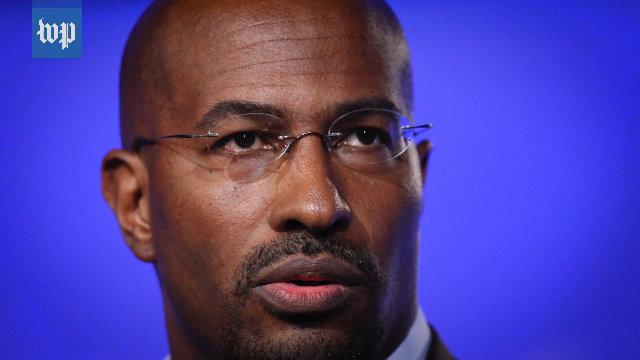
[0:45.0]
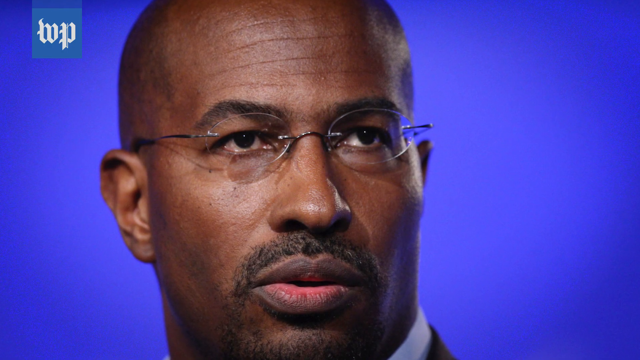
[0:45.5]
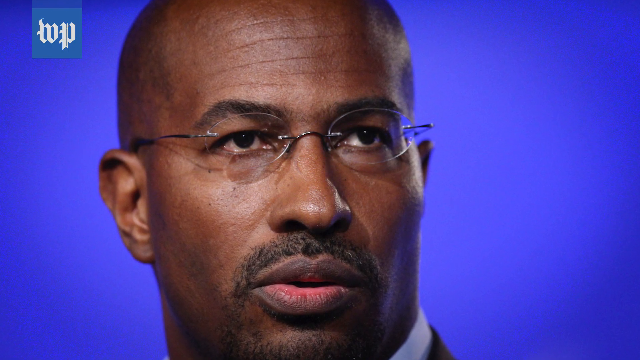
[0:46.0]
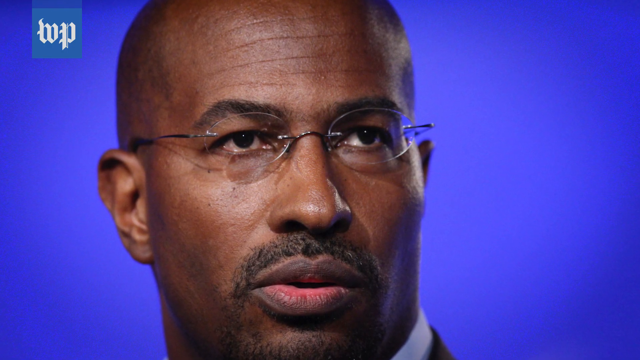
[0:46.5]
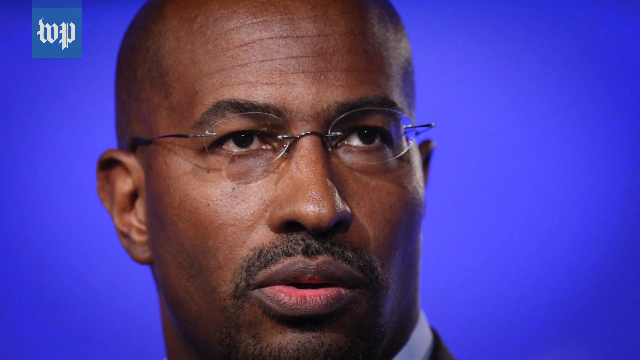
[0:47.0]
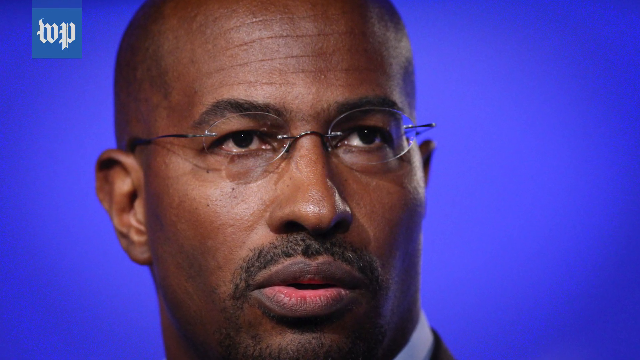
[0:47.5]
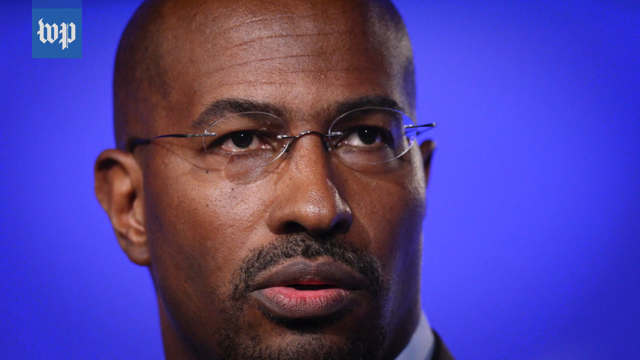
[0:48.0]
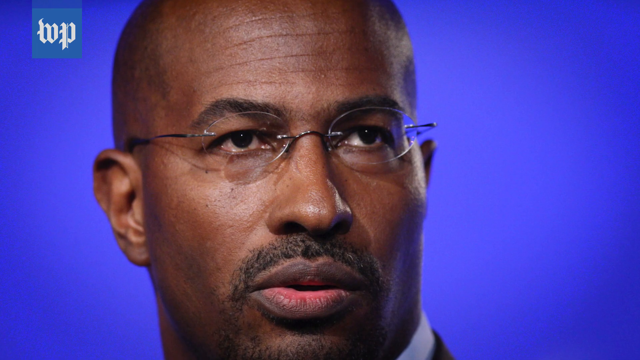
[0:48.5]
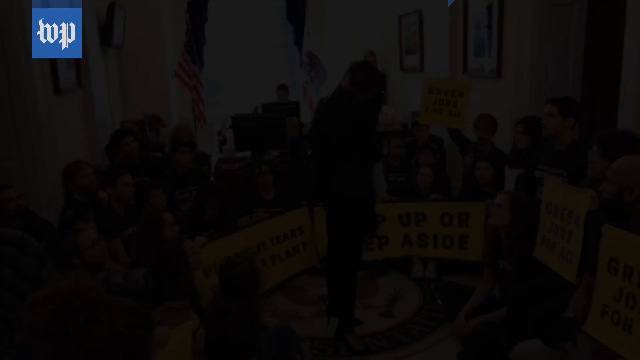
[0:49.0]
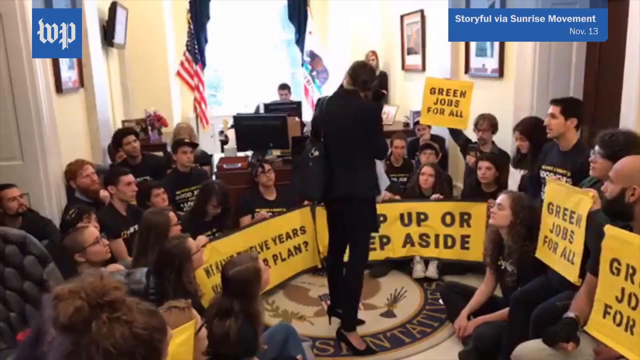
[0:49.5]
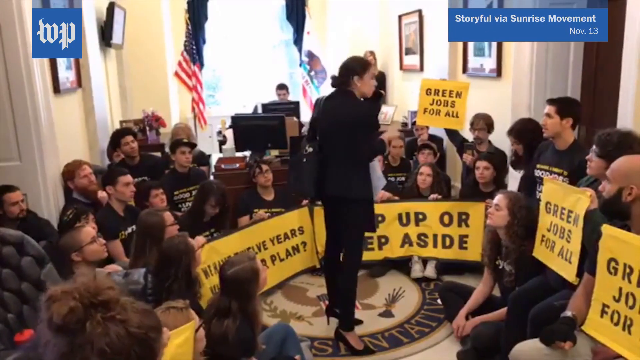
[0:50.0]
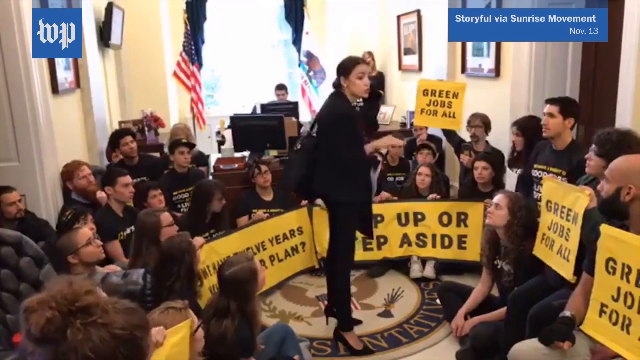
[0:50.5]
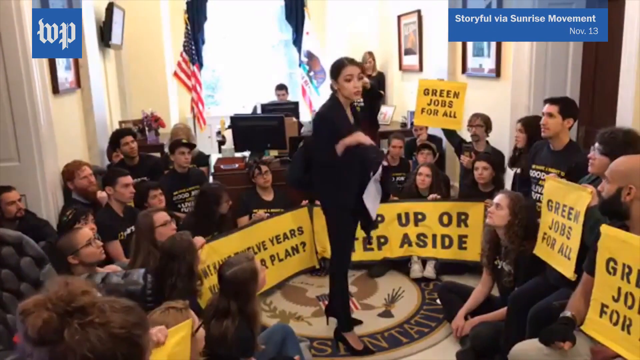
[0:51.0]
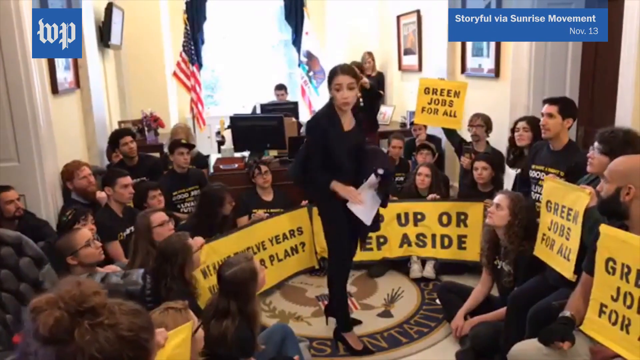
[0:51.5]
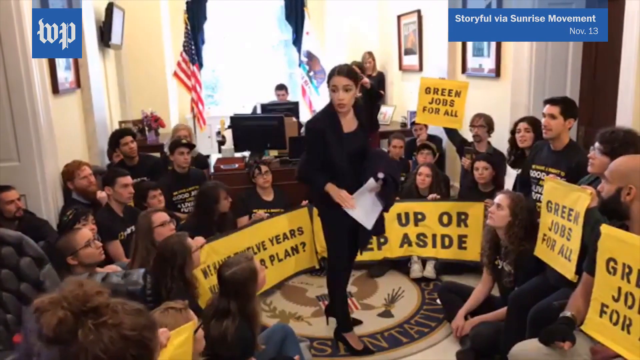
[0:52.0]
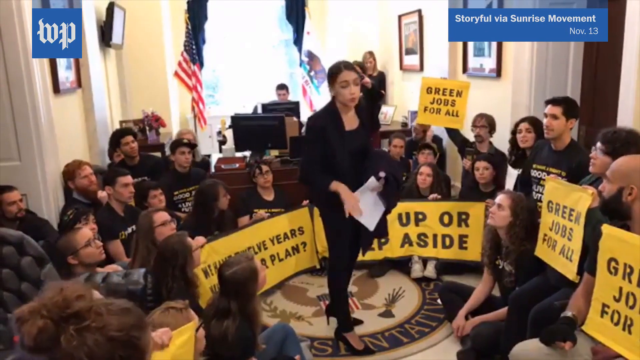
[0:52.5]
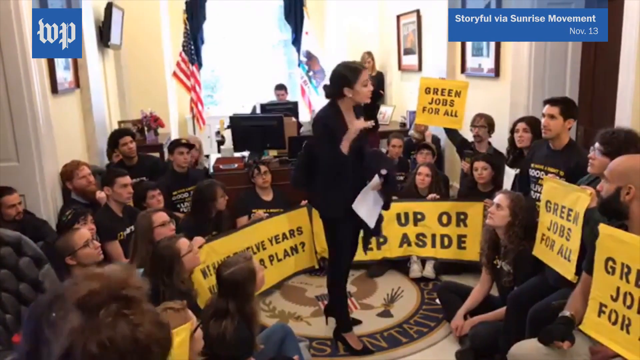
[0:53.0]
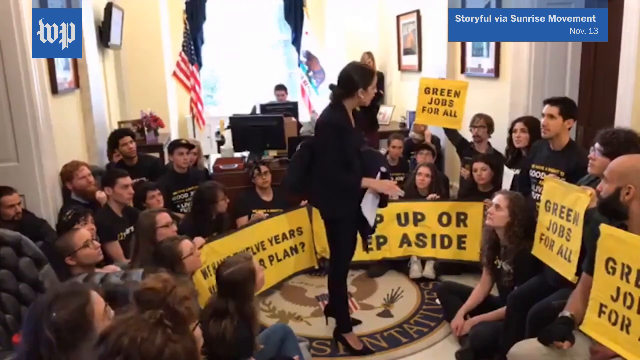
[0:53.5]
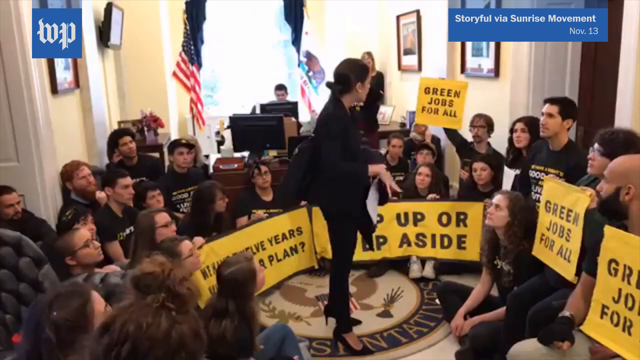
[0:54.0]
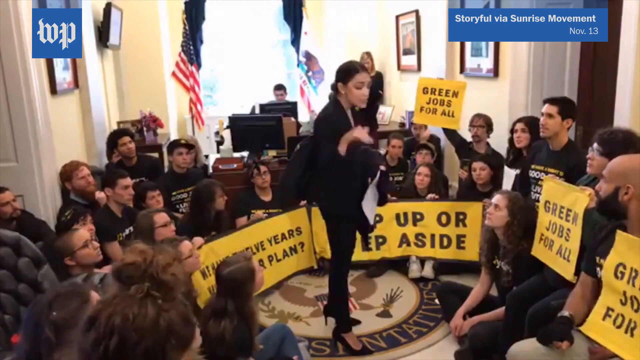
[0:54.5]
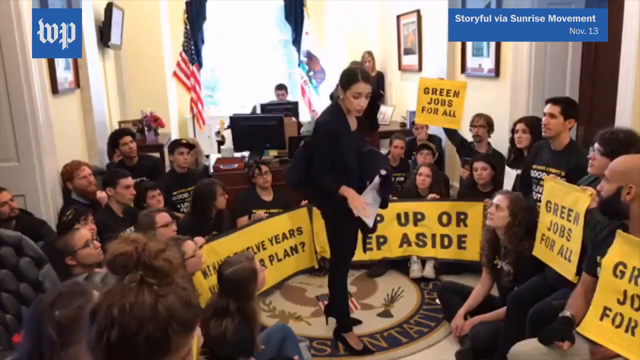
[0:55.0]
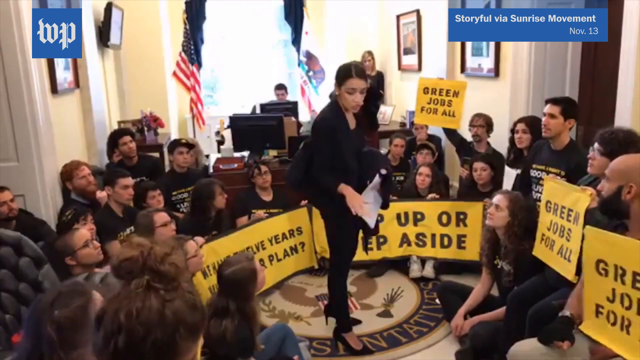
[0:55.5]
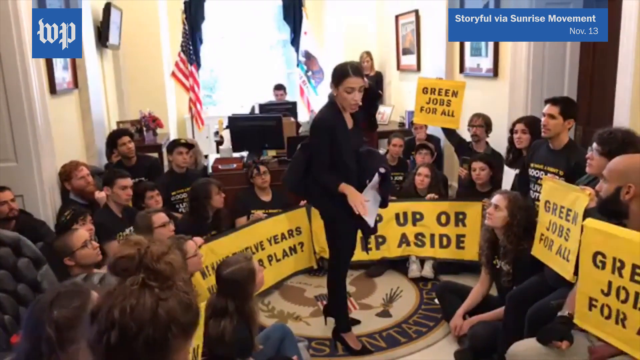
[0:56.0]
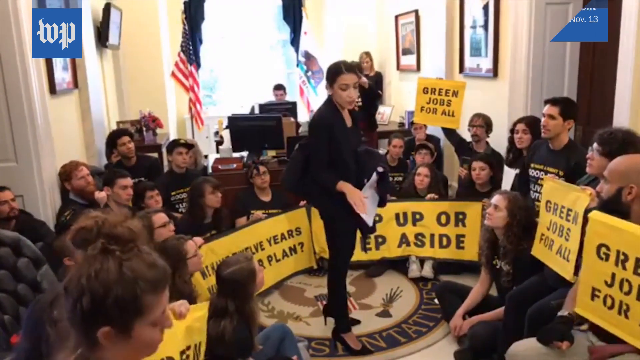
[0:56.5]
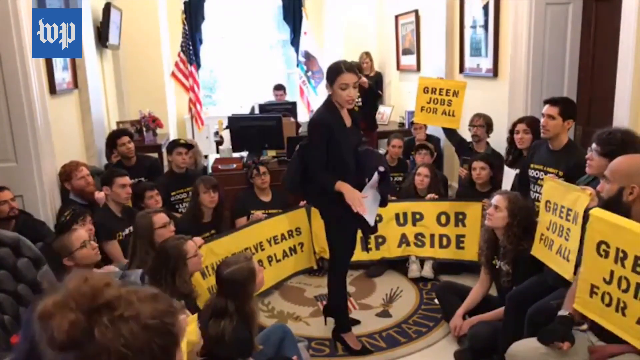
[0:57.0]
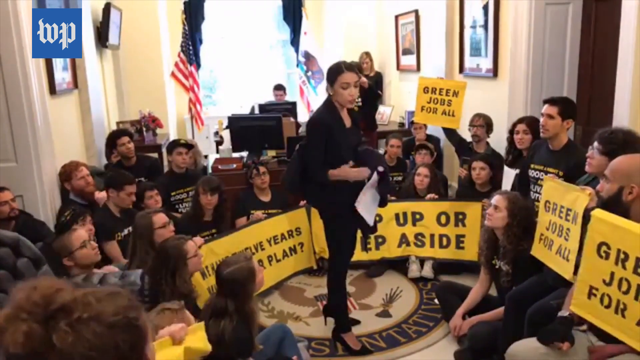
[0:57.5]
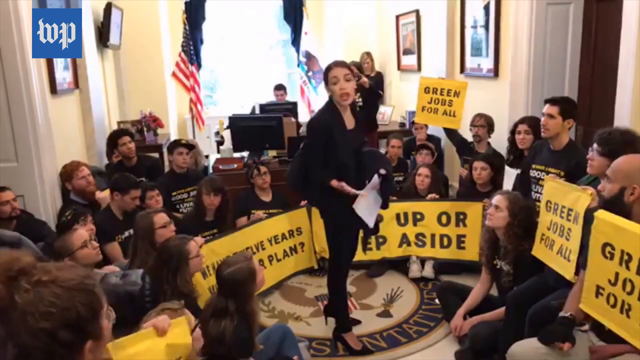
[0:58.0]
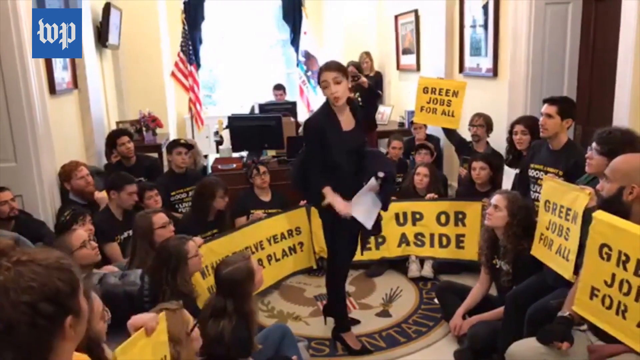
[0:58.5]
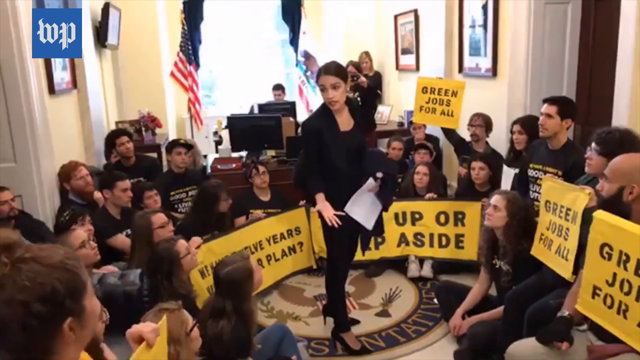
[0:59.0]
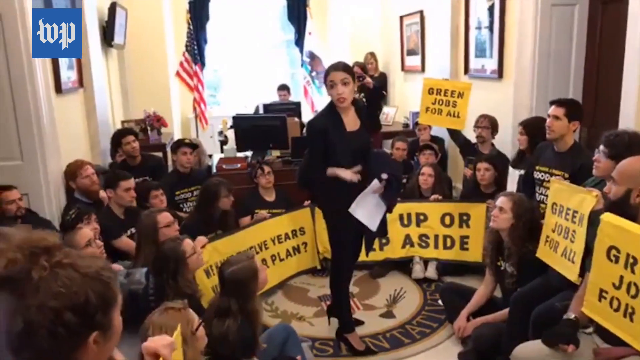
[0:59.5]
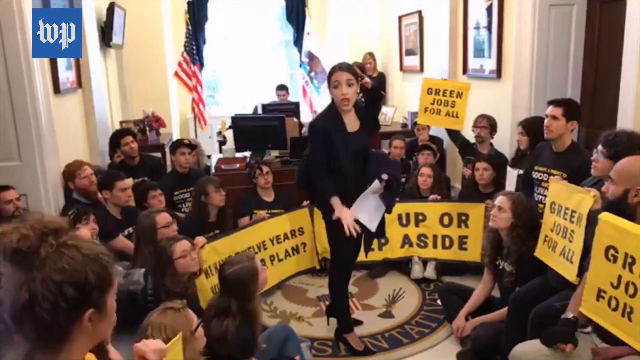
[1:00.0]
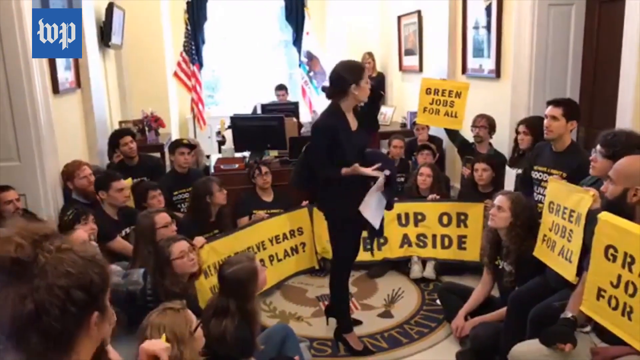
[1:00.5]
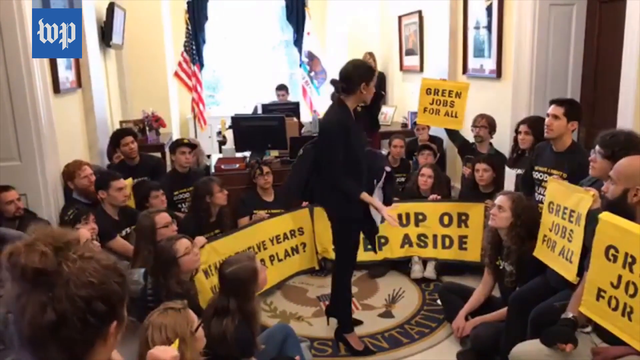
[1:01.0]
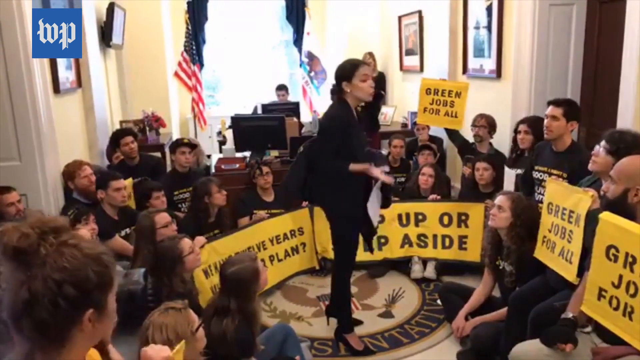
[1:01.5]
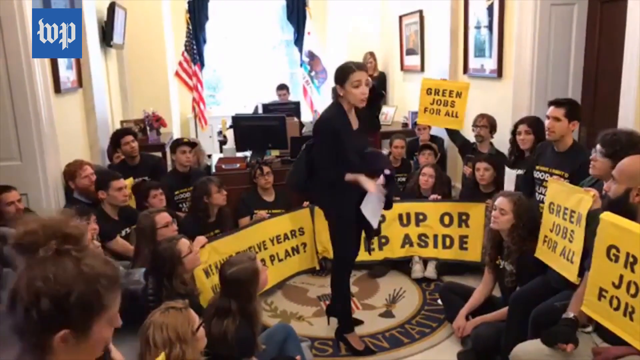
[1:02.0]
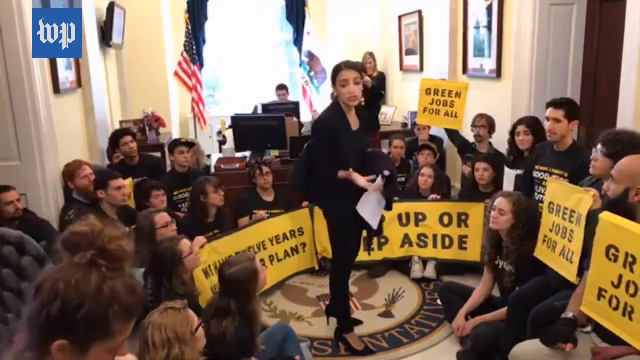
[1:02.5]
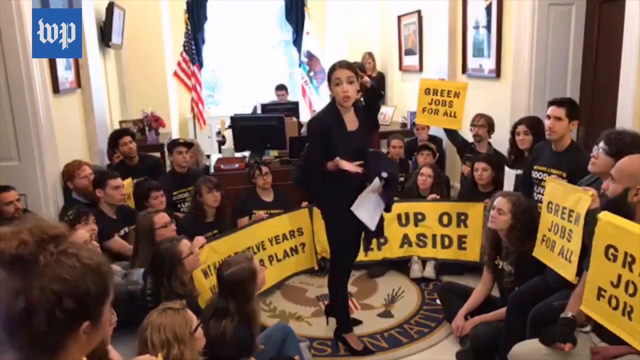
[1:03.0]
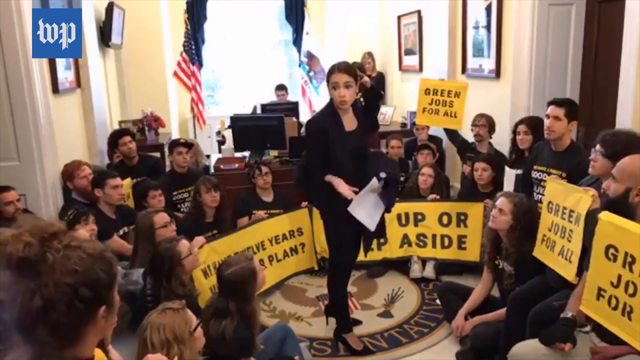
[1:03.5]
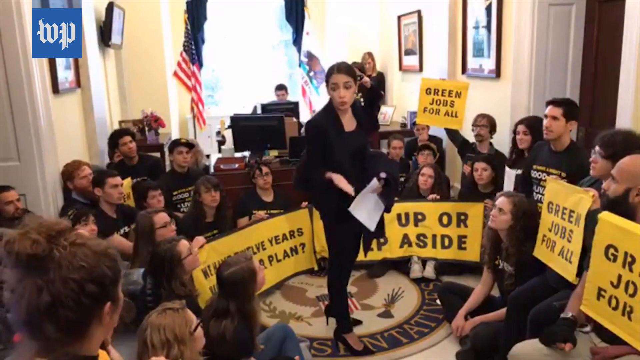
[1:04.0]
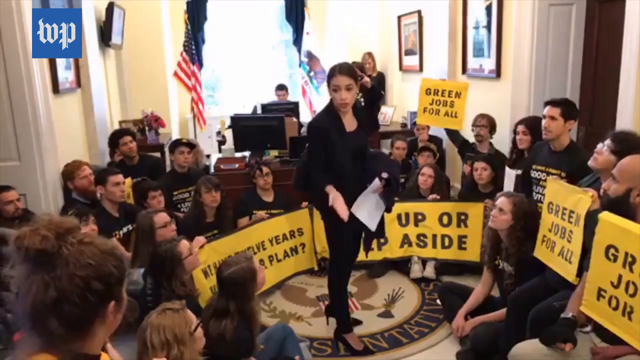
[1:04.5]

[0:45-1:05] The black politician appears again. Then AOC speaks at a Green New Deal rally to a group of college kids, in what seems to be the White House or a United States representative office, possibly her office. Many young people wear Green New Deal or Sunrise Movement shirts, and she speaks to them in a circle. A man behind her is probably videotaping her with his phone and has a yellow sign reading "green jobs for all." AOC talks with her hands and seems serious and very passionate. There are two American flags in the back, some monitors on a desk table, and paintings on the side. There are probably at least 20 people in the small, crowded room, possibly including some adults among the young people.